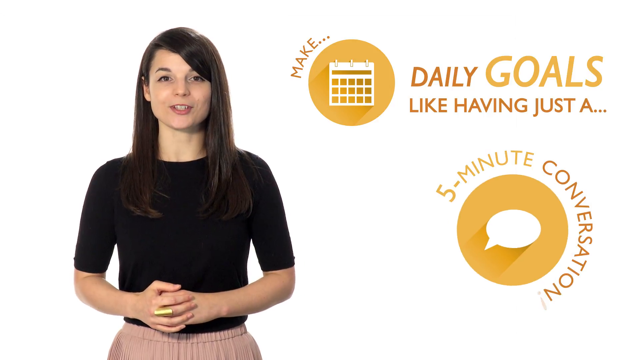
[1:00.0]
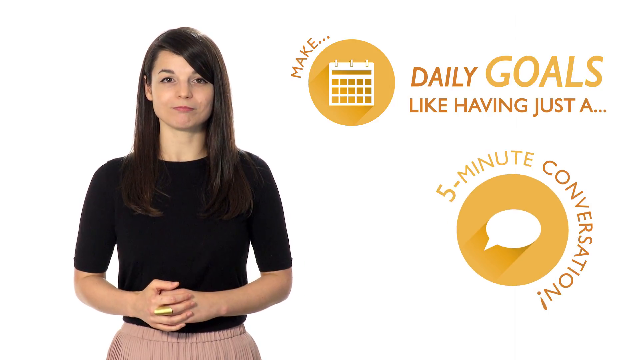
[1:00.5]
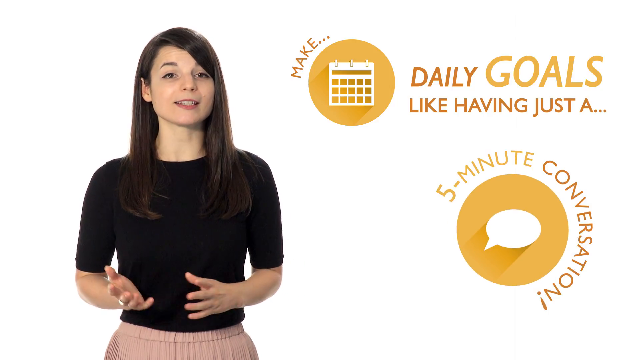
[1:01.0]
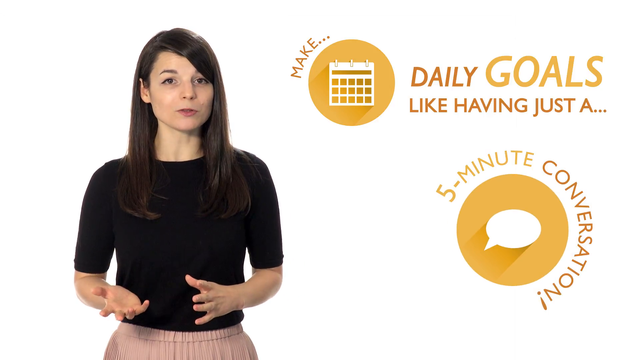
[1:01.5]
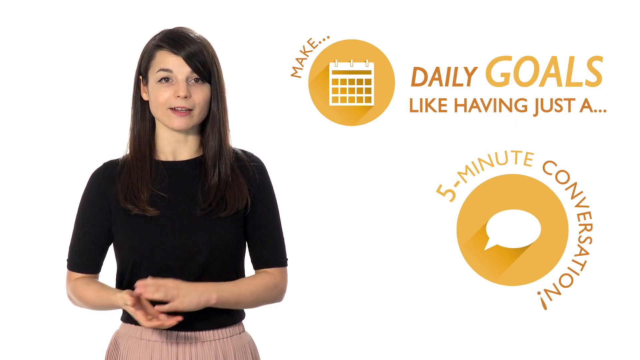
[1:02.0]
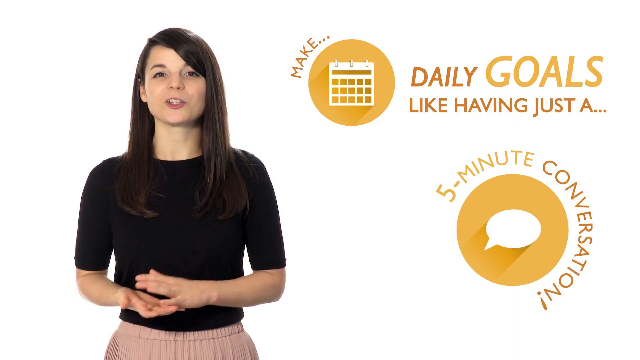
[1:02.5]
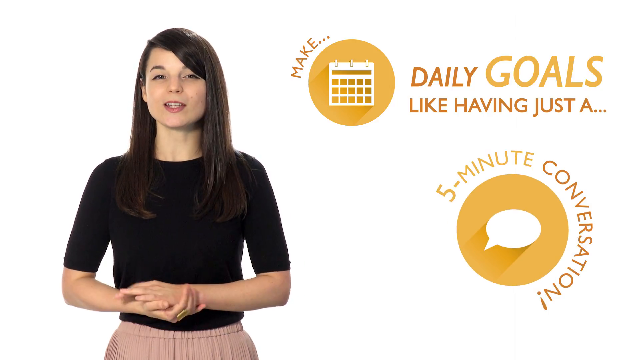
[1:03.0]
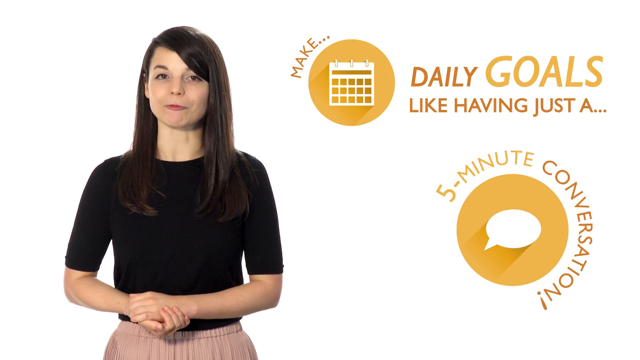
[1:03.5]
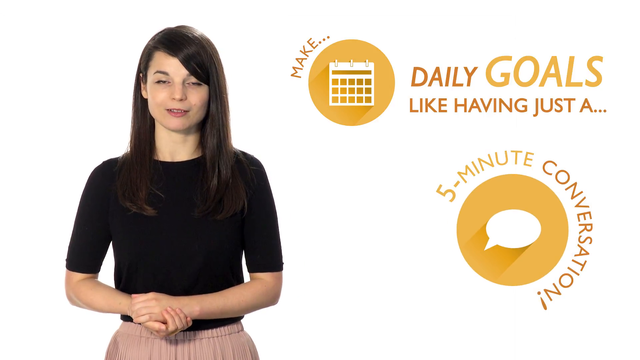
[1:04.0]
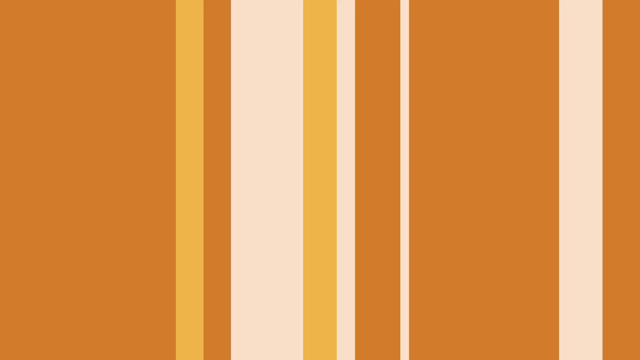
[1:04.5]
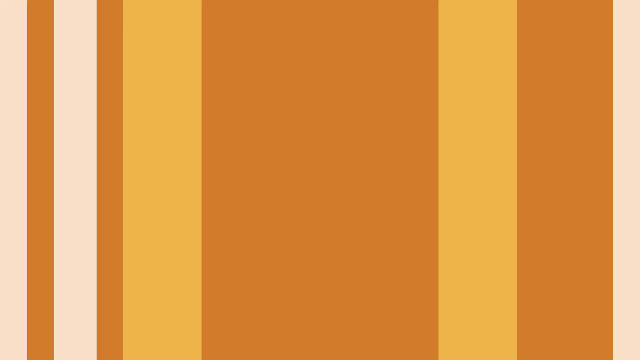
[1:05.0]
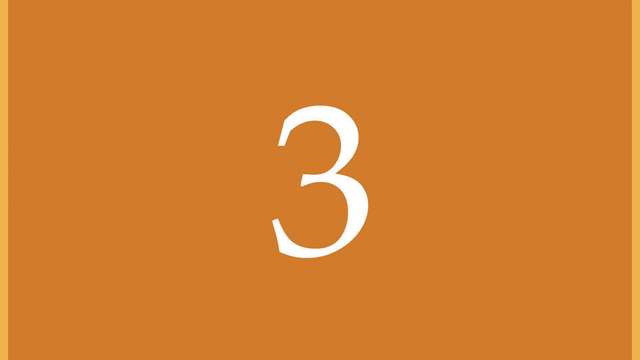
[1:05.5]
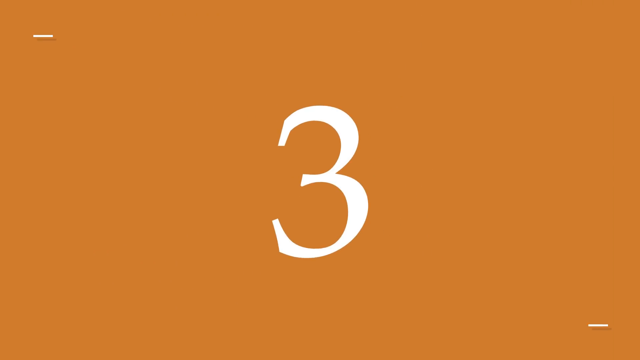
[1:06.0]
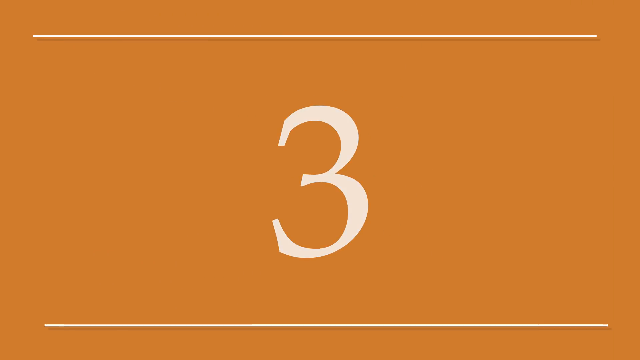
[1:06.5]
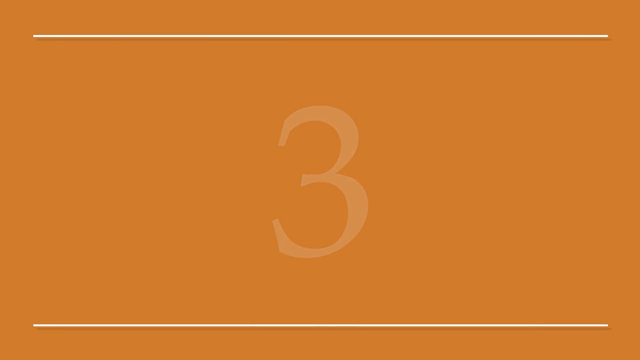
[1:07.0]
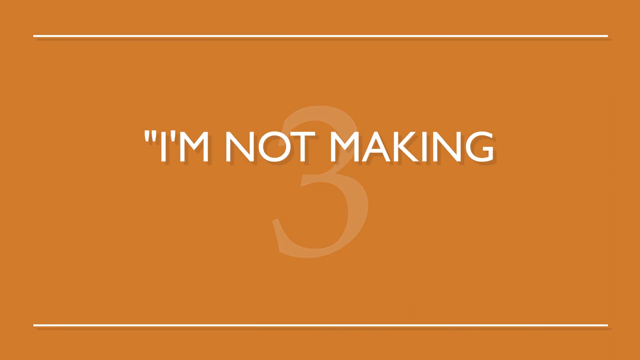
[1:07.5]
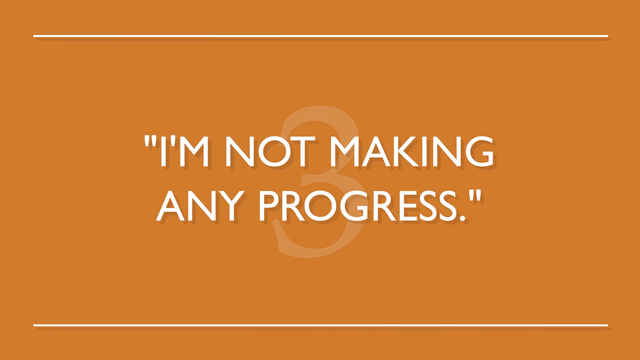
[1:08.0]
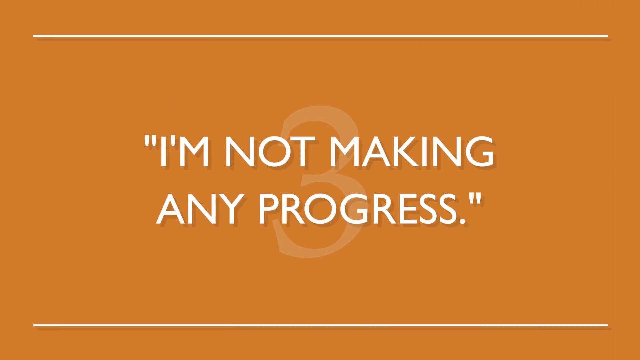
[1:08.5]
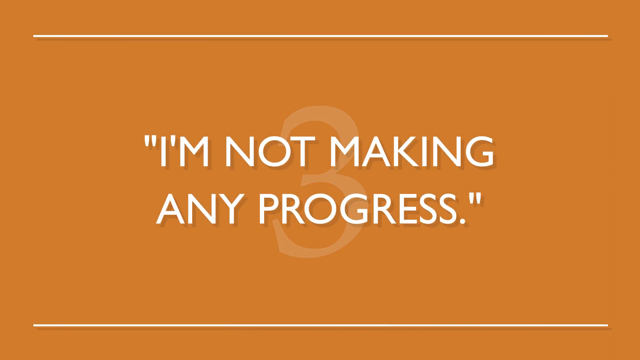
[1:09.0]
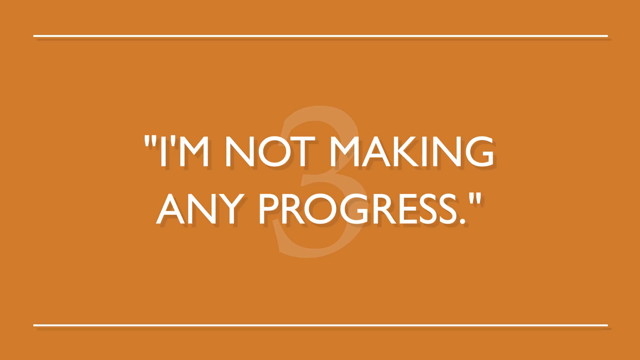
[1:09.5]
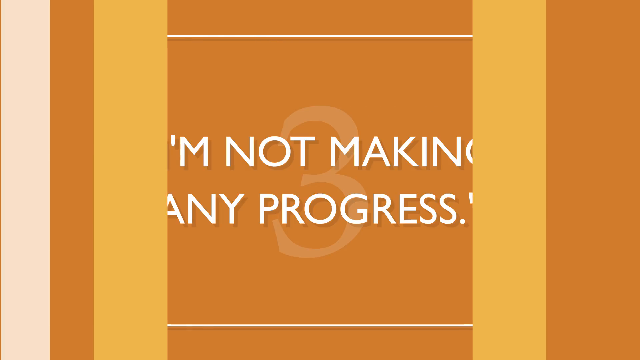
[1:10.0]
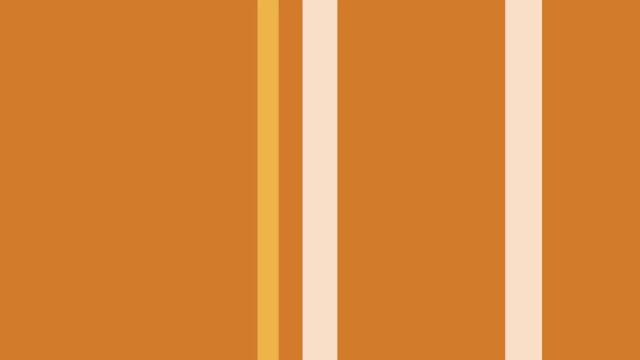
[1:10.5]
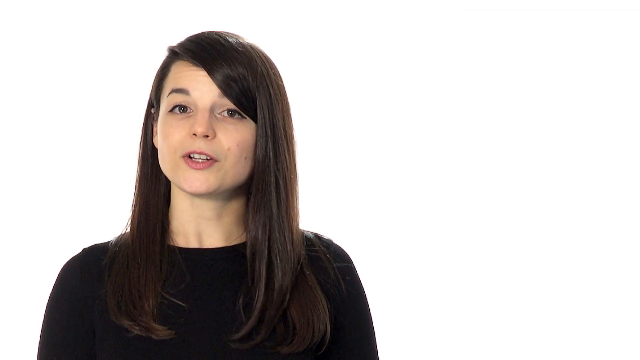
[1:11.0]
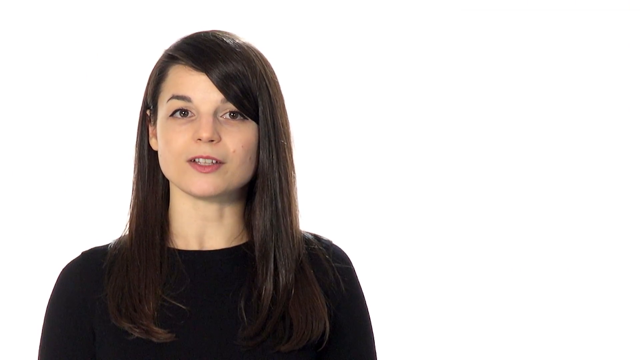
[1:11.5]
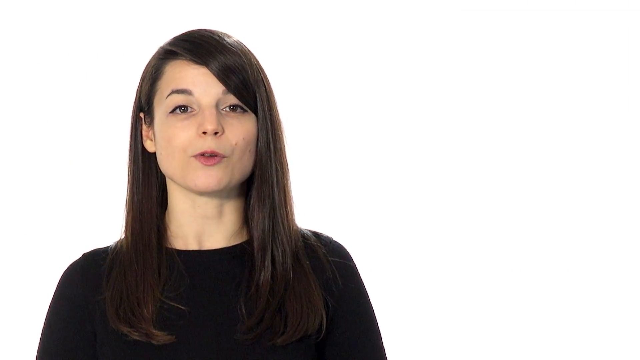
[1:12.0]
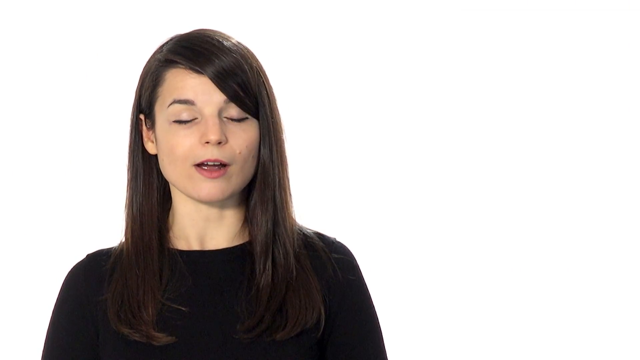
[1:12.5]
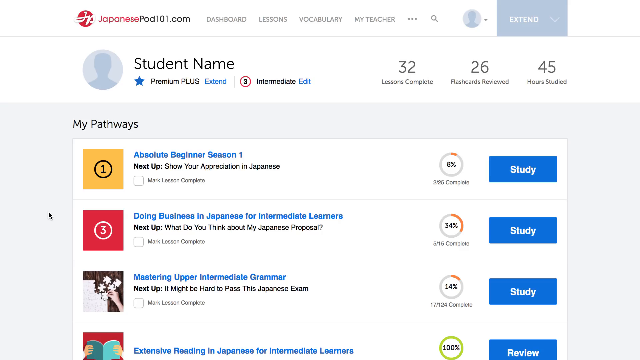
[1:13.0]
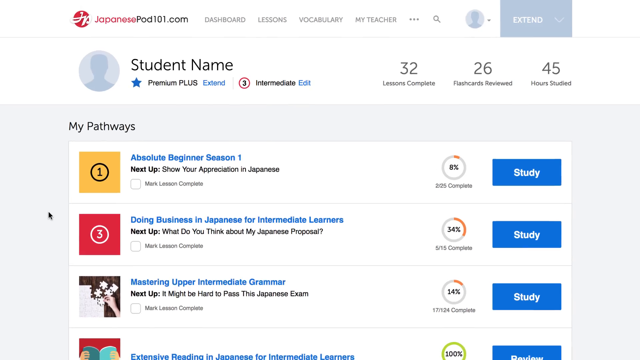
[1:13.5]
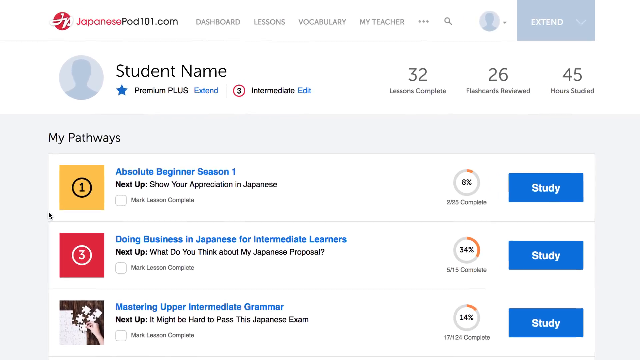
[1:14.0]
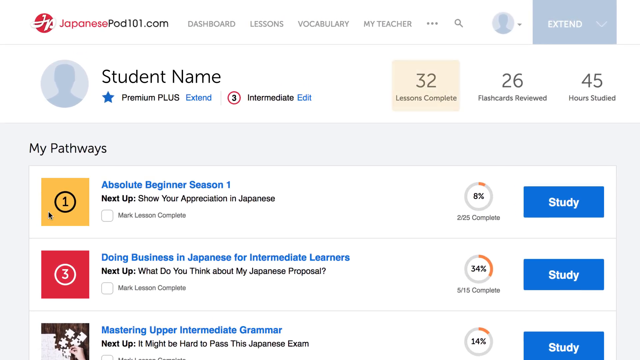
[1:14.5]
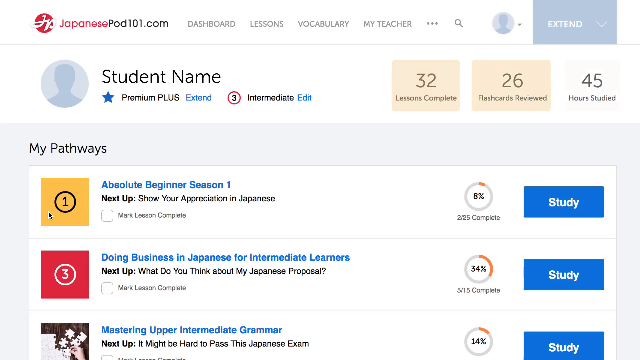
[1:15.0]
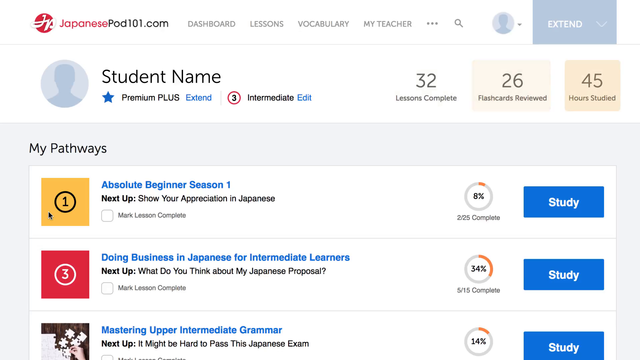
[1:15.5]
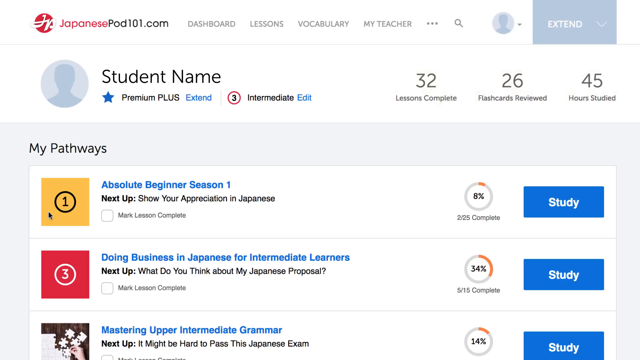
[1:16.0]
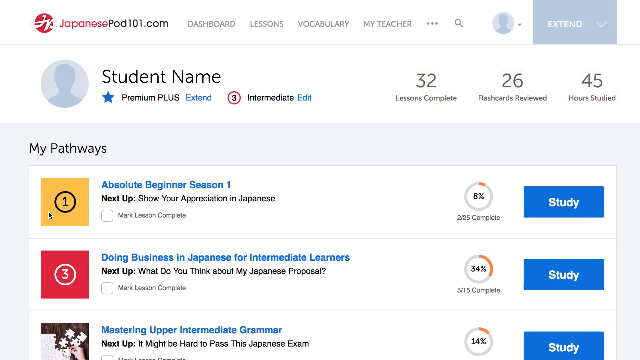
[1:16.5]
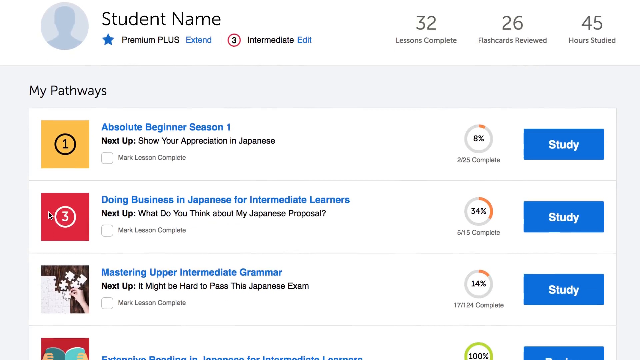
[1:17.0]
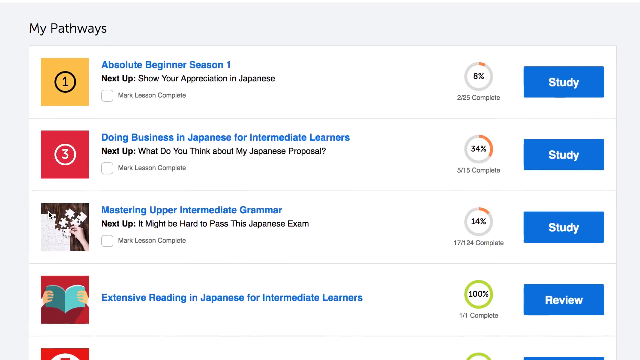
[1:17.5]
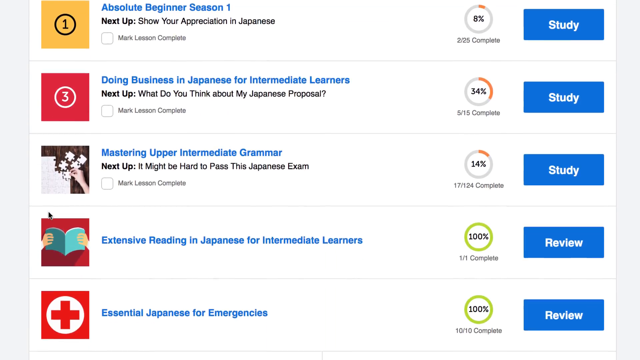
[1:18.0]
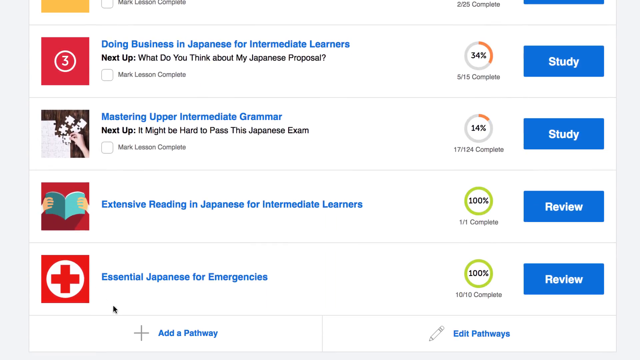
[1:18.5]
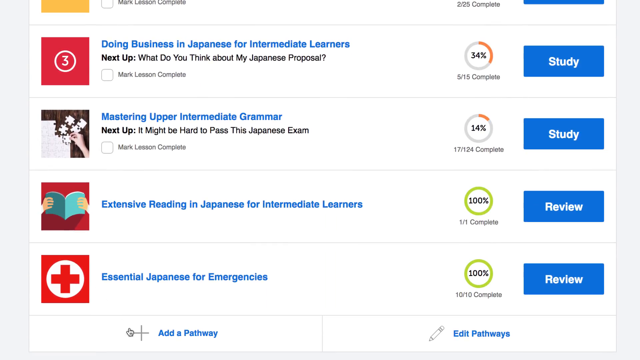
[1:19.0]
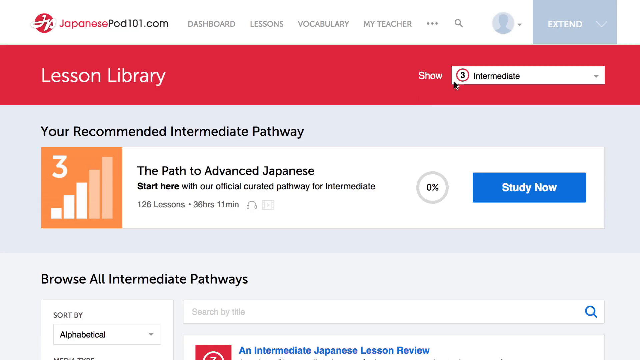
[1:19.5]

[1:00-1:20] A numbered list of learning fears is shown, and number one reads "I am not good enough to start speaking yet," followed by a written solution. The woman elaborates on this for some time, then the list moves to problem number two, which reads "I am afraid I'll never be fluent." Its solution reads "make daily goals like having just five minutes conversation daily." Number three reads "I am not making any progress daily." The solution for it leads to a website with various possible solutions, which is shown on screen and scrolled through.